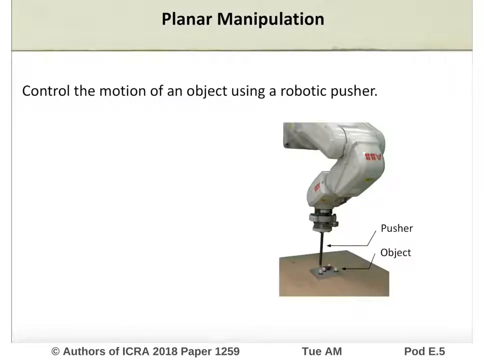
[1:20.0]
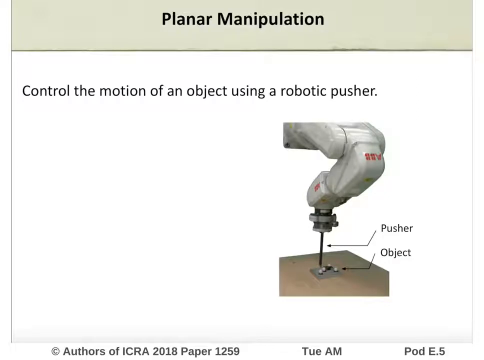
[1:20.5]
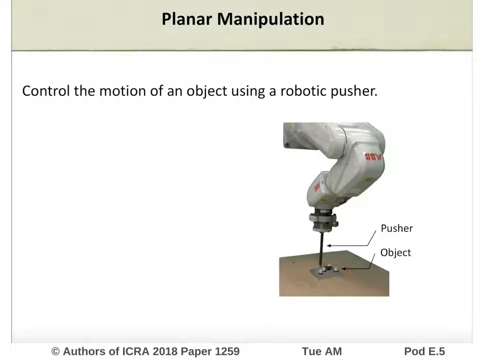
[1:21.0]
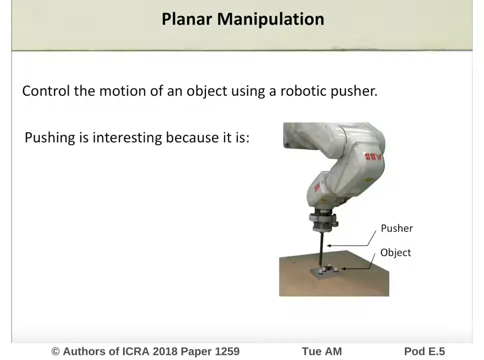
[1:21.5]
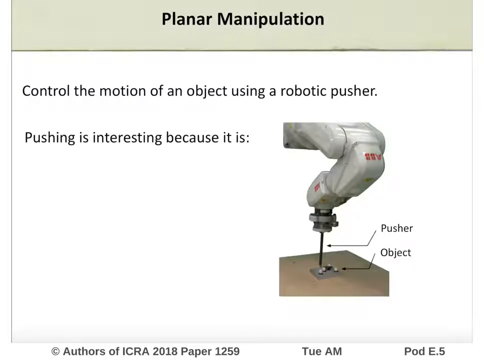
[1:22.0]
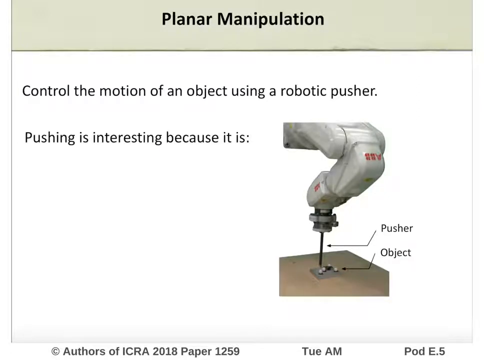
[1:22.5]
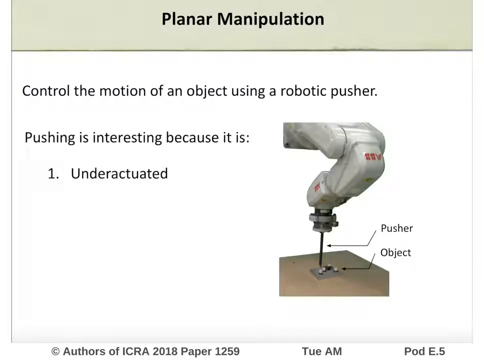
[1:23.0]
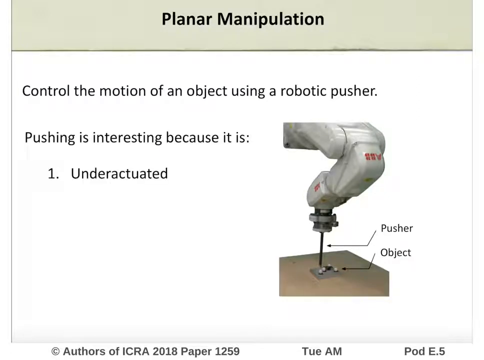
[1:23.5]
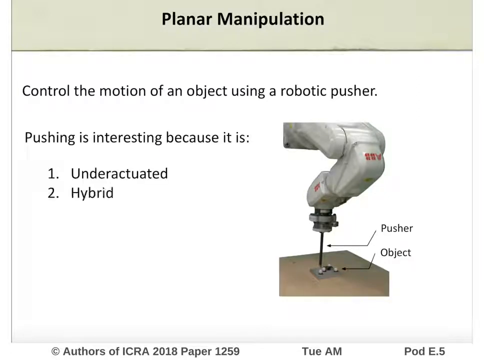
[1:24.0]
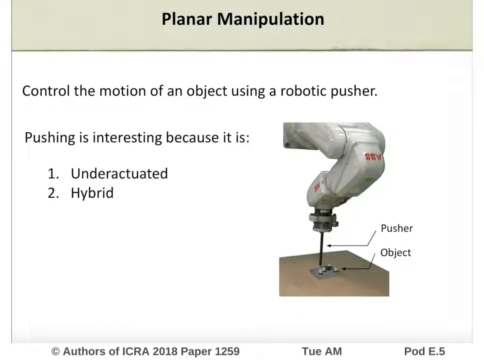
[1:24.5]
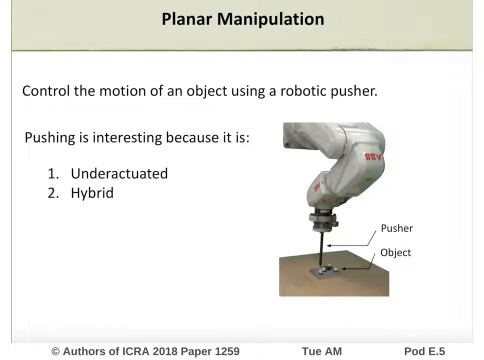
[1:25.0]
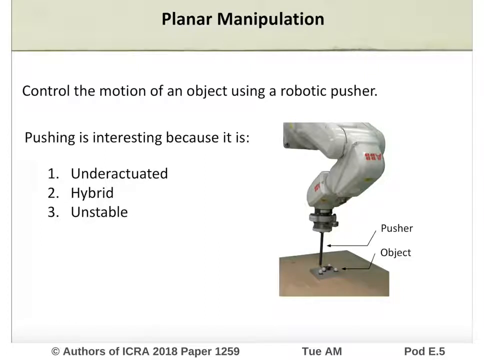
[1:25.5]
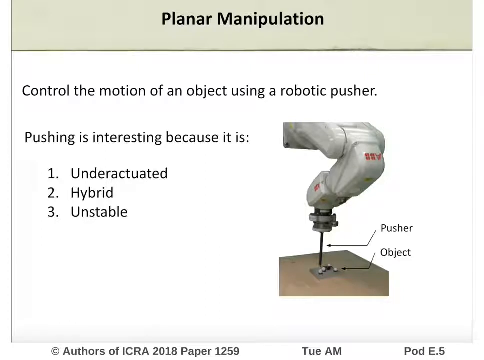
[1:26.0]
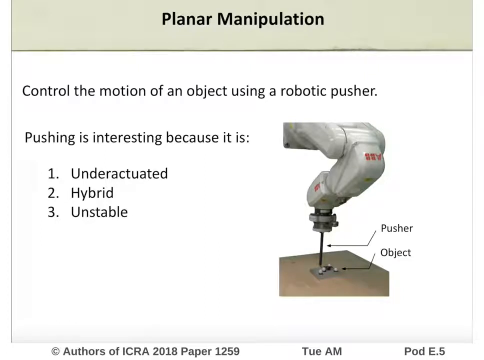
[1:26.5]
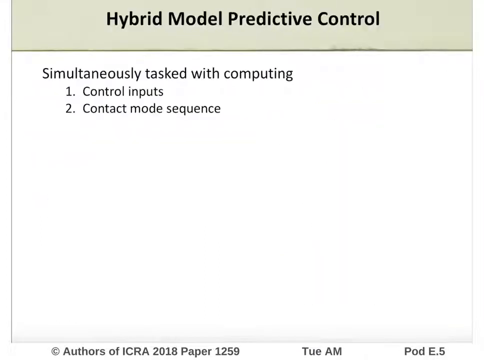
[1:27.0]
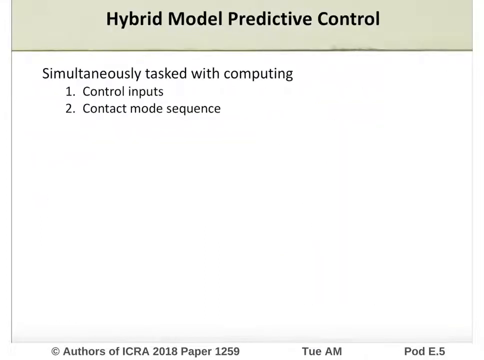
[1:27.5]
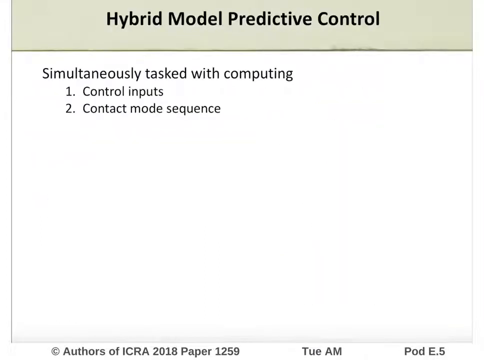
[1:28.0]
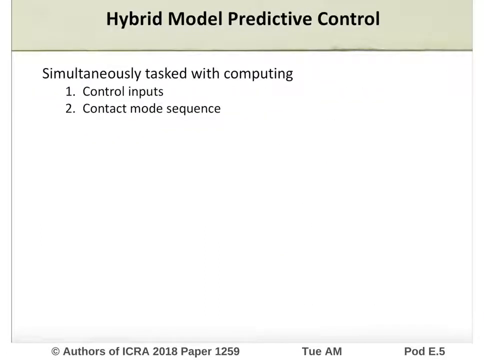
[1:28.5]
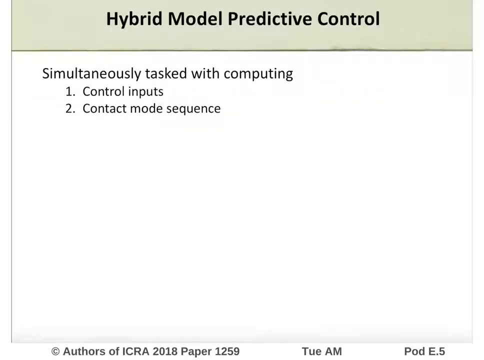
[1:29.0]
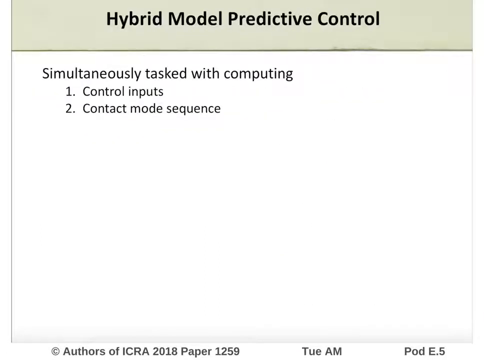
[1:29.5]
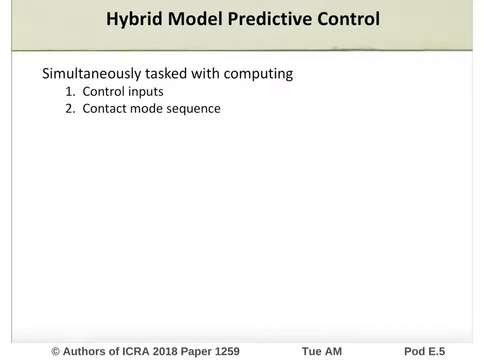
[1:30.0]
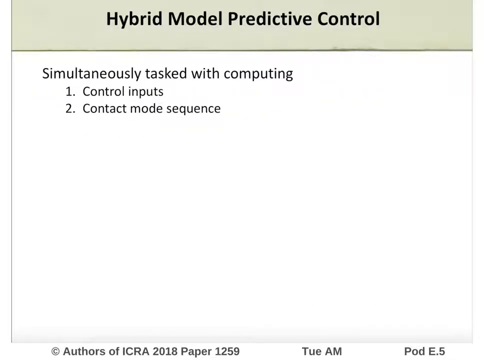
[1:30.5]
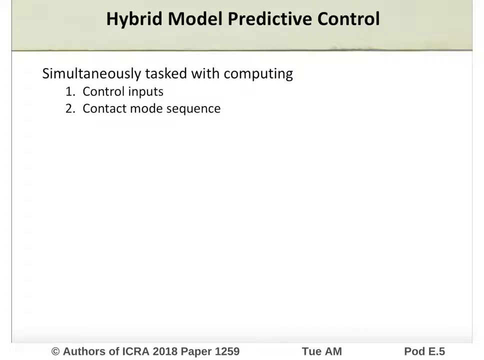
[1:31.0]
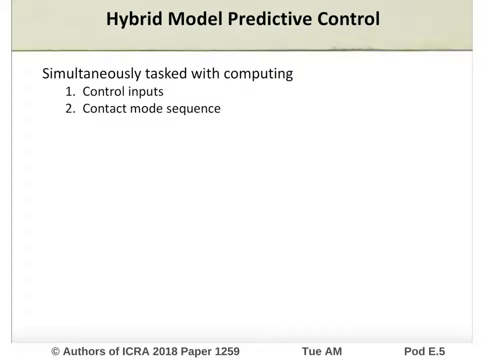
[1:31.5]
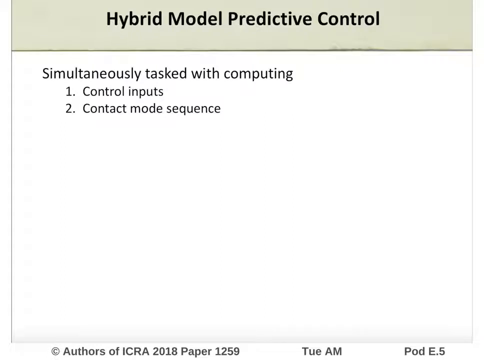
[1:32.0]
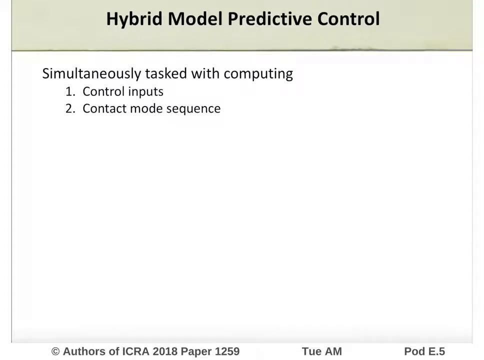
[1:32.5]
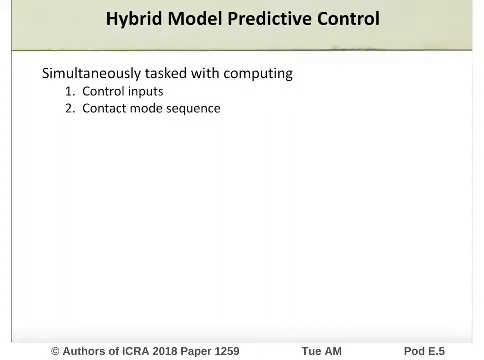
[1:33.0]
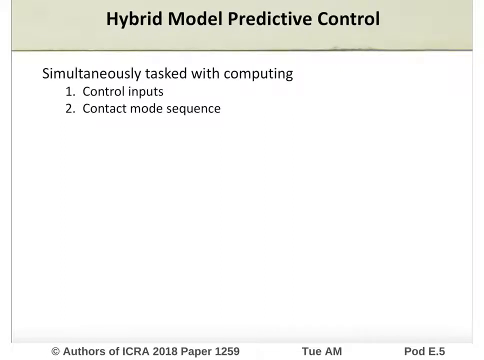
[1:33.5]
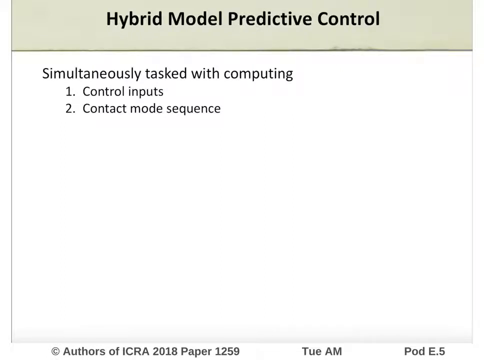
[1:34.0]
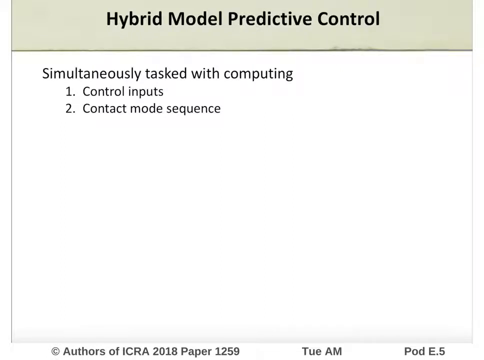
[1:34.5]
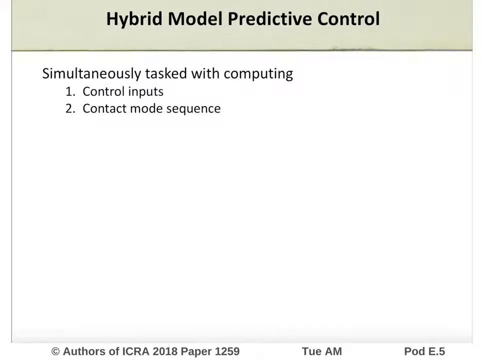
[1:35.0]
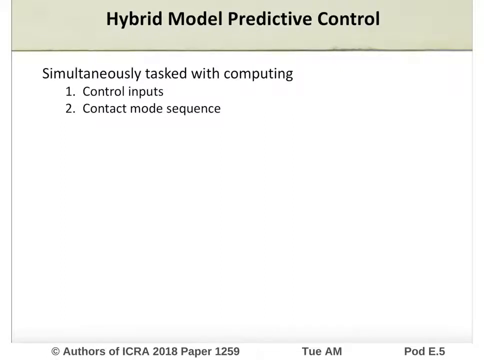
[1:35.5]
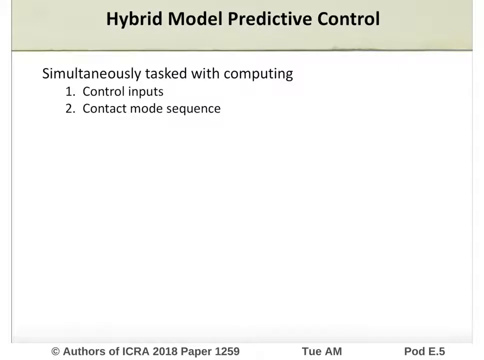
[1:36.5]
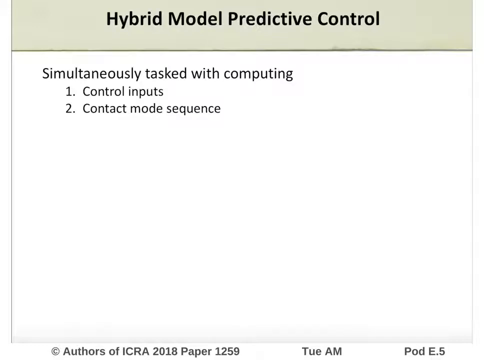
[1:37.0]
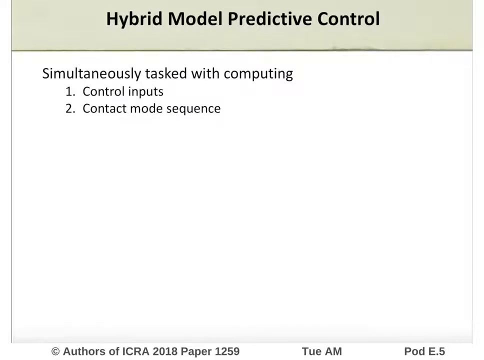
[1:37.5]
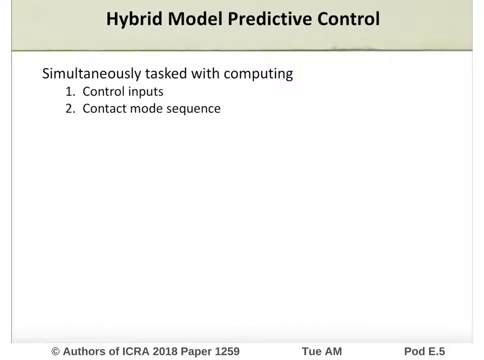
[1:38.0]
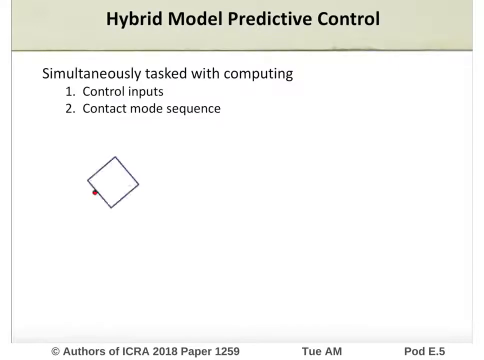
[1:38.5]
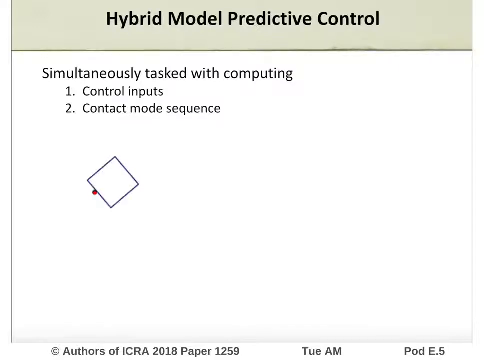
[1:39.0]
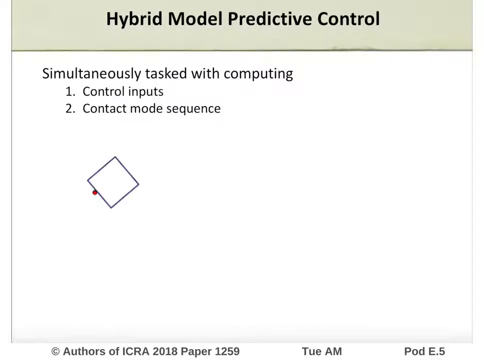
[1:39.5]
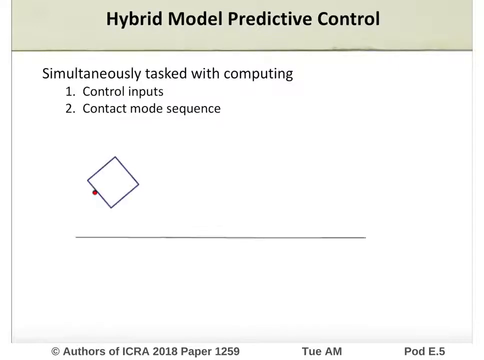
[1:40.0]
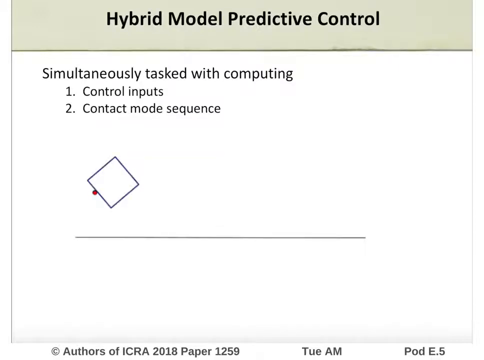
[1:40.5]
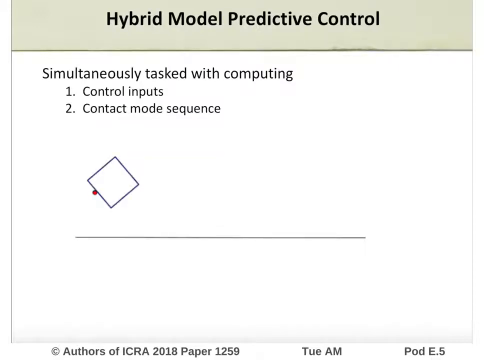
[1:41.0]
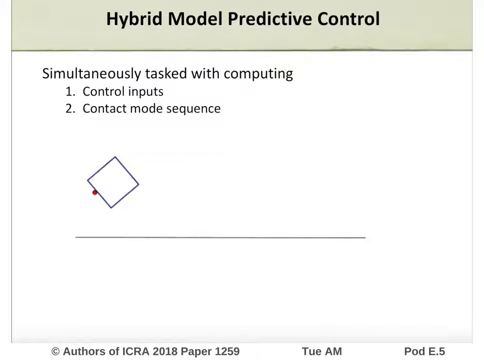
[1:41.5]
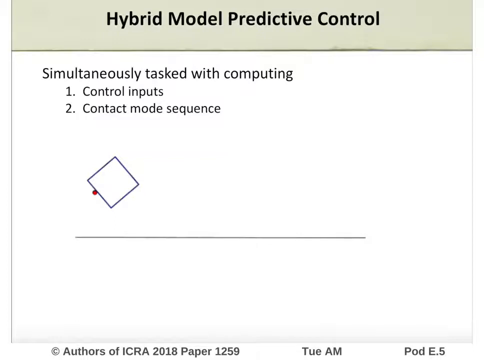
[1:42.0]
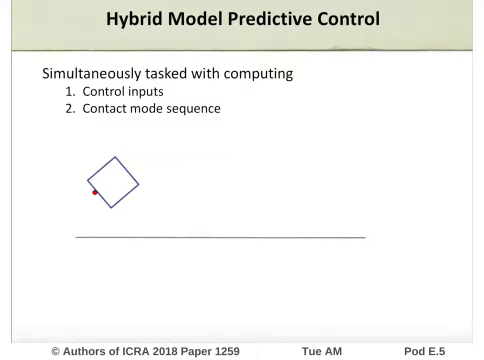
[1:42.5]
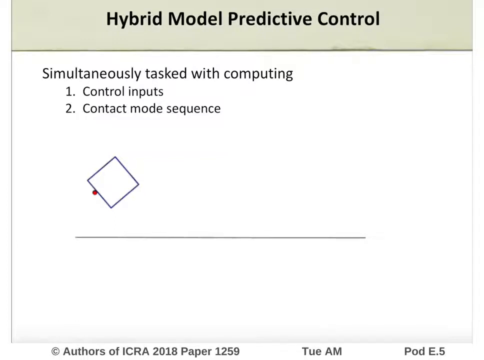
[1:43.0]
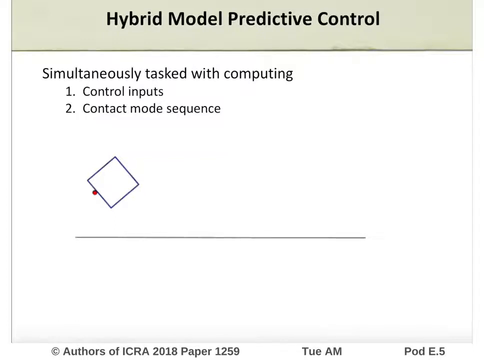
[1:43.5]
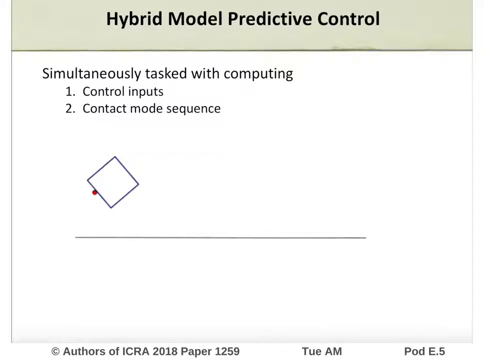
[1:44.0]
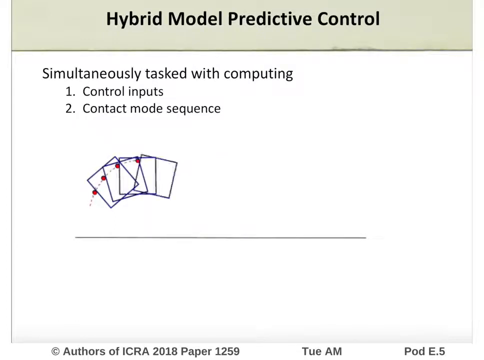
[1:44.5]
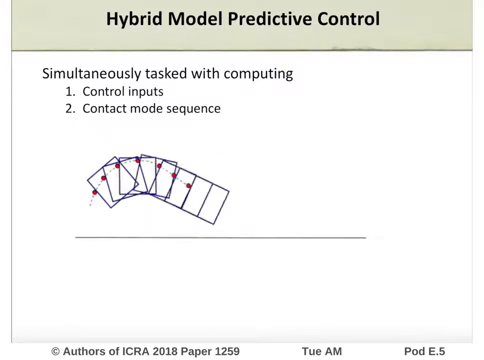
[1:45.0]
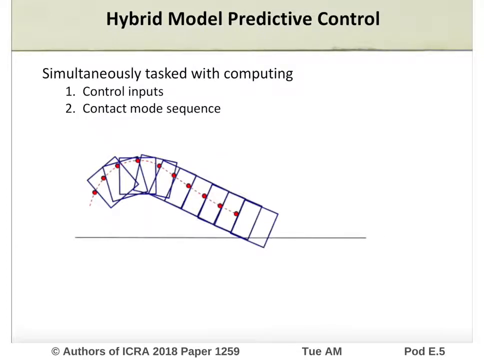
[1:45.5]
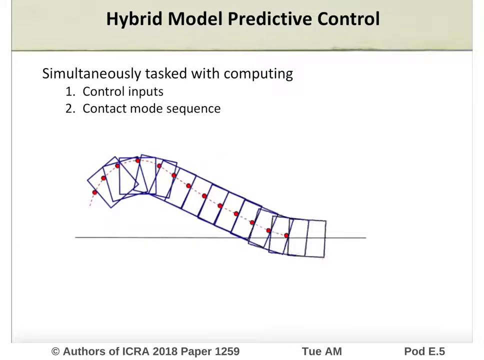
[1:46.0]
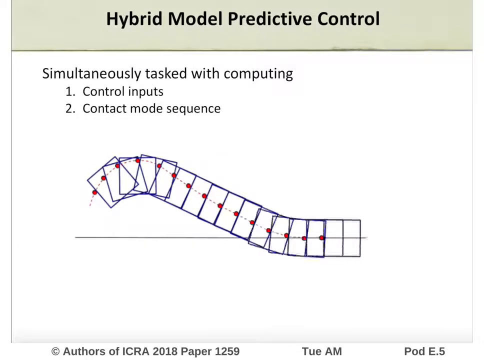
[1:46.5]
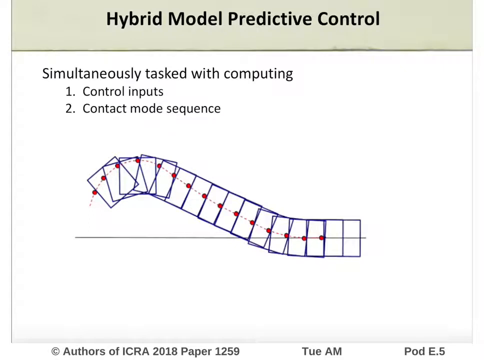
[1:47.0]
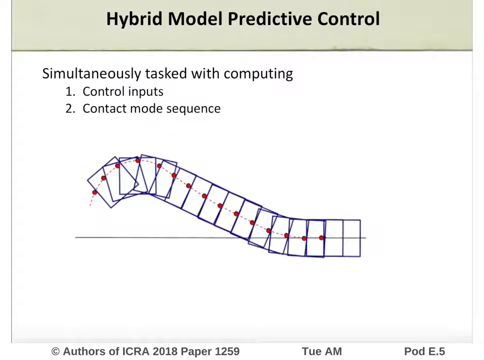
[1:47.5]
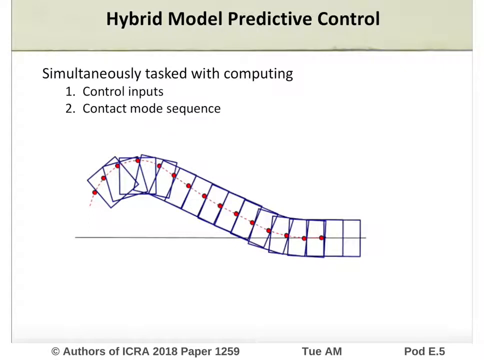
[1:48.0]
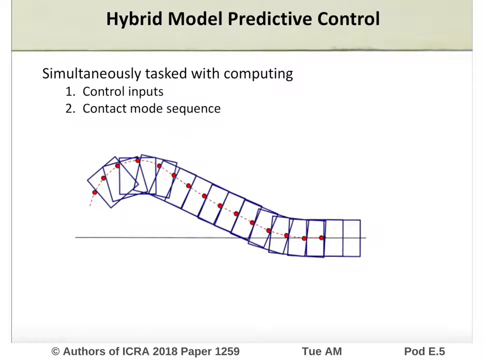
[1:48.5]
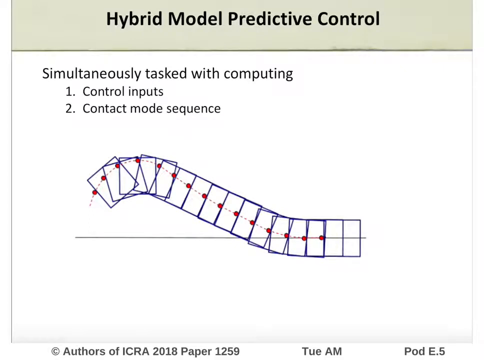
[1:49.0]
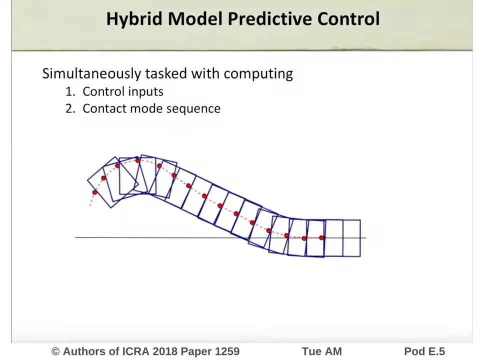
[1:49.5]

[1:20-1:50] The text covers controlling the motion of an object: pushing is interesting because it is underactuated, it is hybrid, and it is unstable. Hybrid Model Predictive Control is described as simultaneously tasked with computing the control inputs and the contact mode sequence. A diagram then appears showing a square turned diagonally like a rhombus, with a red dot on the bottom at roughly the eight o'clock position. A line runs underneath it, probably about eight inches long on the screen. Steps show the square being pushed and rotated at the same time, with positions counted one through seventeen that match up to the line. What appears at the very end cannot be made out.